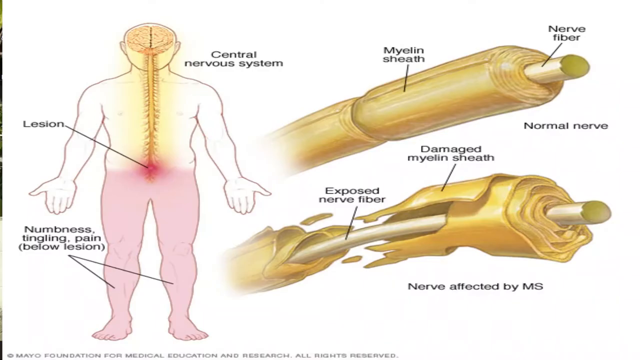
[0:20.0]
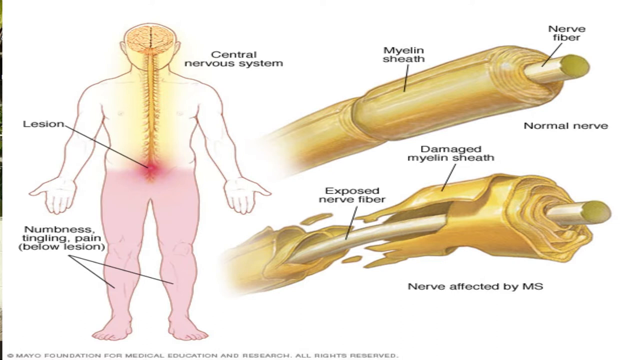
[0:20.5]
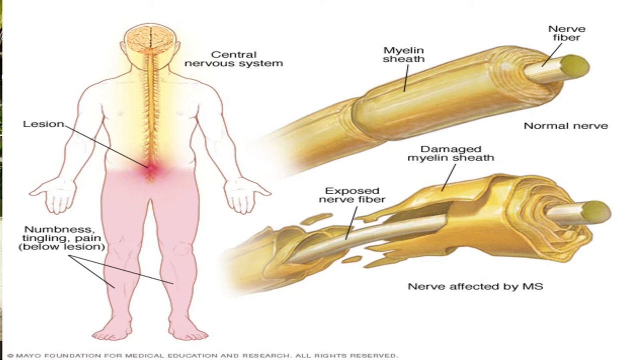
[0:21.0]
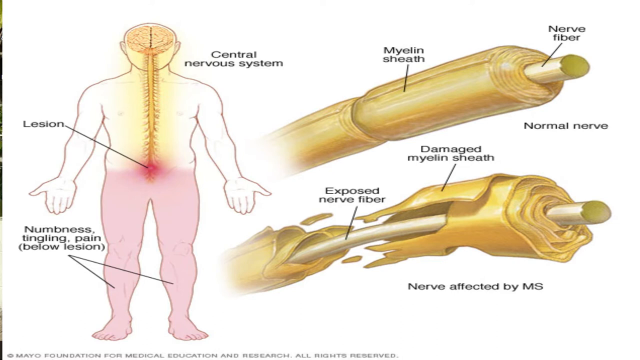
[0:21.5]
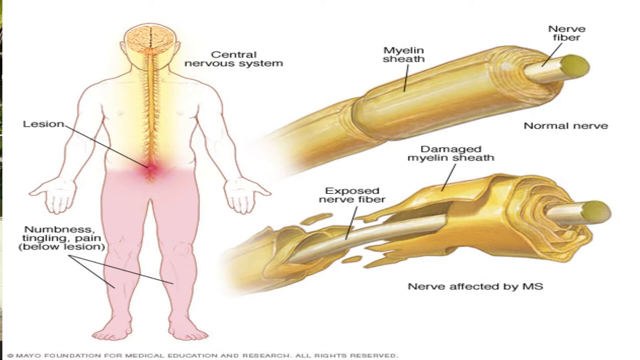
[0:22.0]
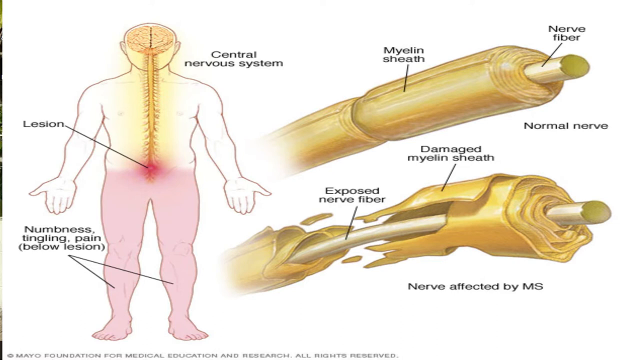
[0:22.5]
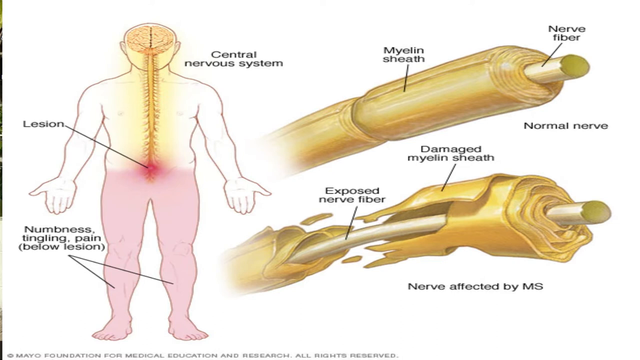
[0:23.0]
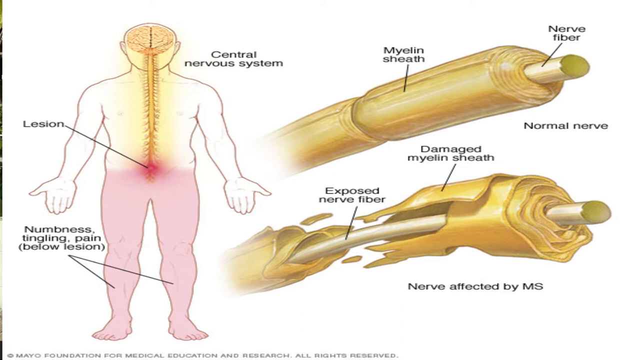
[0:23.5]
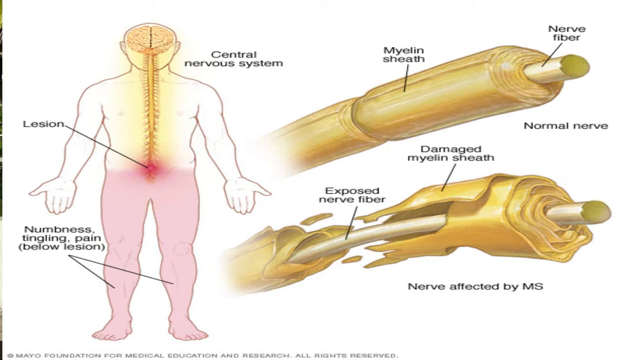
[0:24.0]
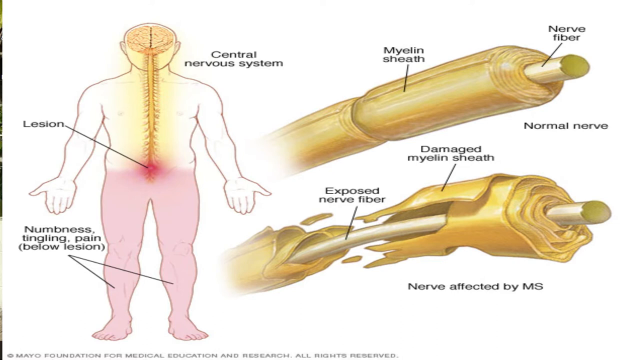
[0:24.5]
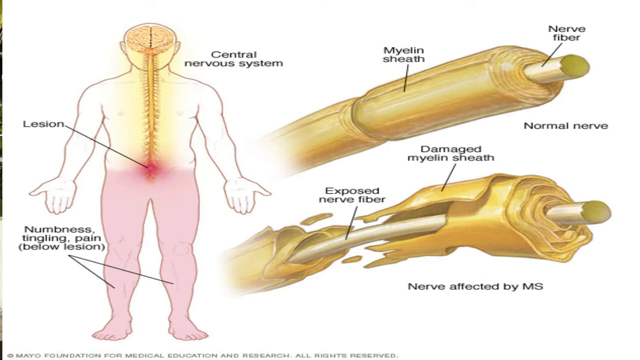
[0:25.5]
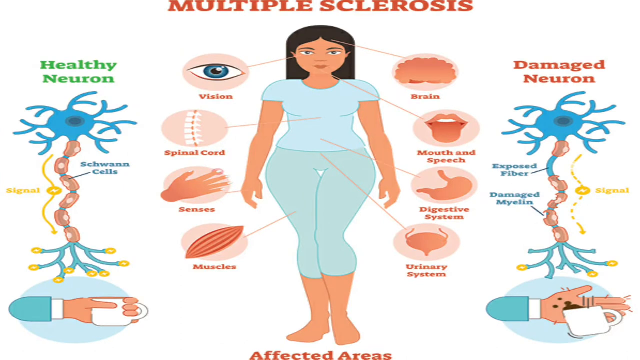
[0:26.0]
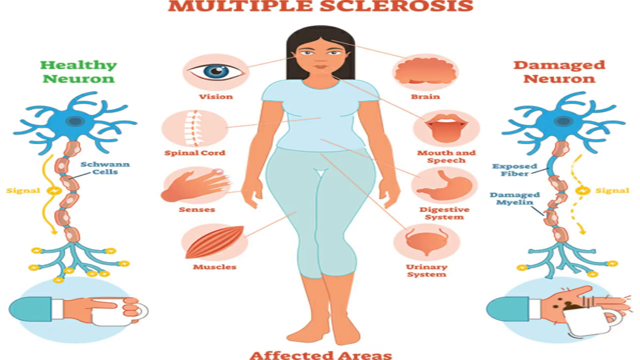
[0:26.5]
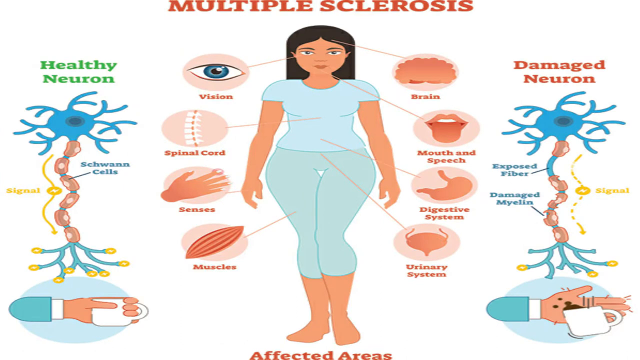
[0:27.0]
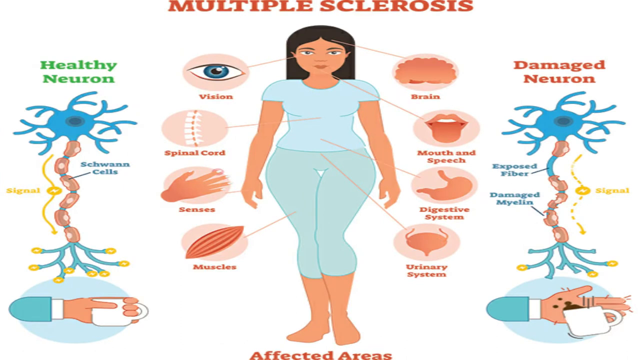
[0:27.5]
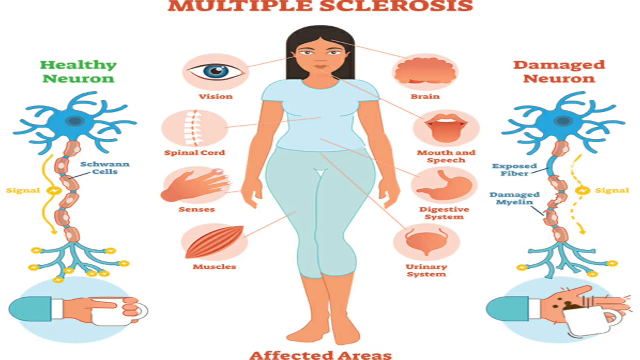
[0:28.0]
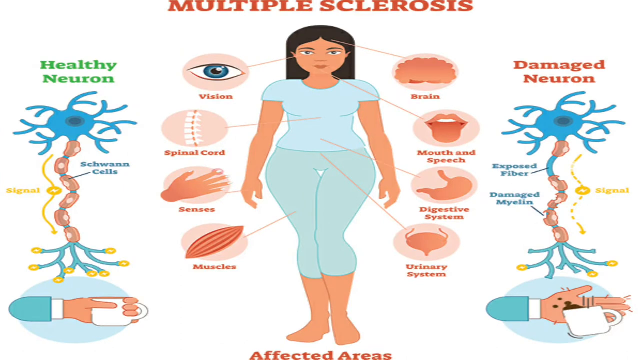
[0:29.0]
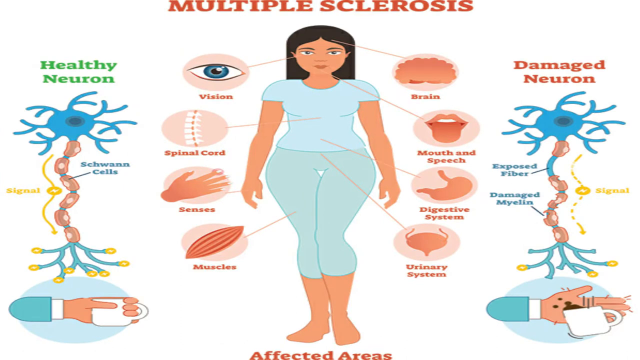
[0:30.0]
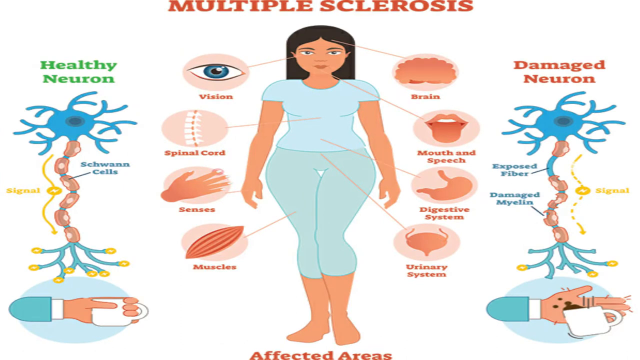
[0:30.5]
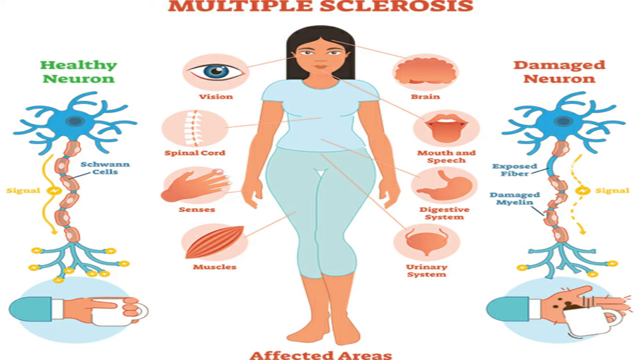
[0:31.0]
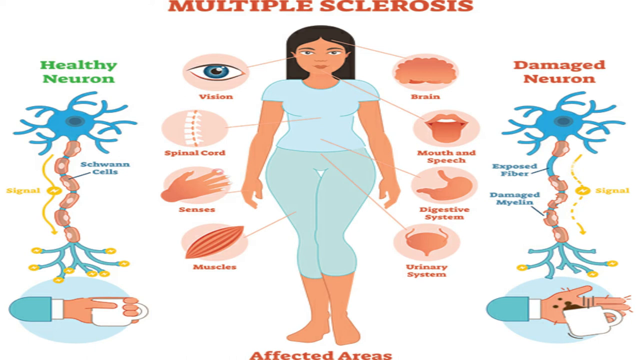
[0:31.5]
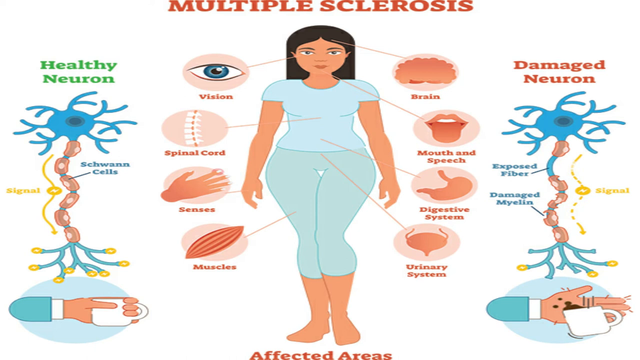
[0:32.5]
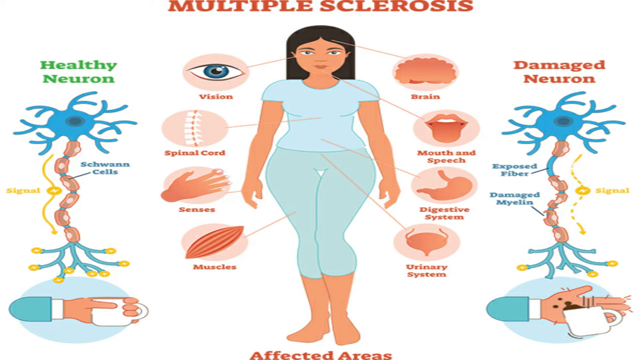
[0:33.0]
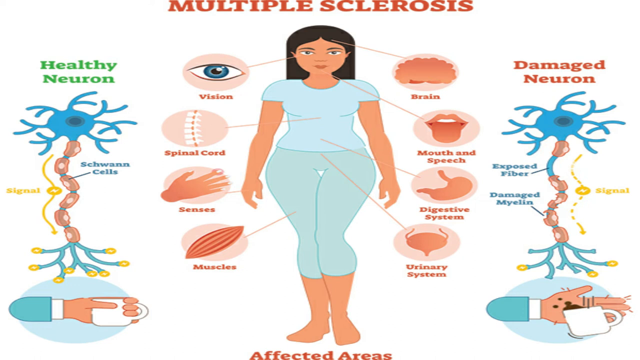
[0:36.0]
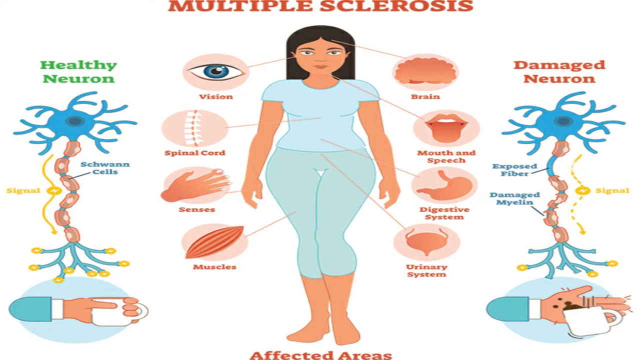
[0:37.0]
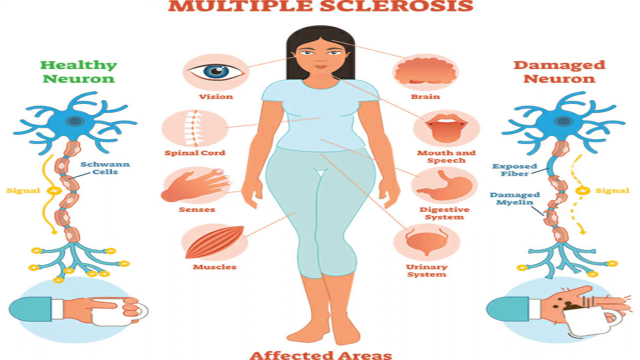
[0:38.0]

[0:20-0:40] Several diagrams are shown. On the left side is the central nervous system: what looks like a diagram of a man showing his brain, a spinal cord going down, and a swollen red spot underneath the spinal cord labeled "lesion." The lower half of his body is a sort of light red color, and both legs are labeled "numbness, tingling, pain (below lesion)." On the right side is a close-up of a normal nerve and a nerve affected by MS. The normal nerve is full, whole, round, and looks healthy, while the nerve affected by MS underneath has exposed nerve fiber and damaged myelin sheath, so it looks like it is falling apart and not rolled up tight. Another diagram follows, showing a cartoon image of a woman wearing a shirt and capri pants. At the top of the screen it says "Multiple Sclerosis," and at the bottom it says "affected areas." Different parts of her body are labeled, with a line coming from her body ending in a circle that holds a larger image of the body part. The labels are brain, mouth and speech, digestive system, urinary system, muscles, senses, spinal cord, and vision. On the left and right sides of the screen are images of a healthy neuron and a damaged neuron. Underneath the healthy neuron is an image of a hand holding a cup of coffee; underneath the damaged neuron is a little clipart image of a hand that looks like it has just dropped the coffee, with the coffee spilling everywhere.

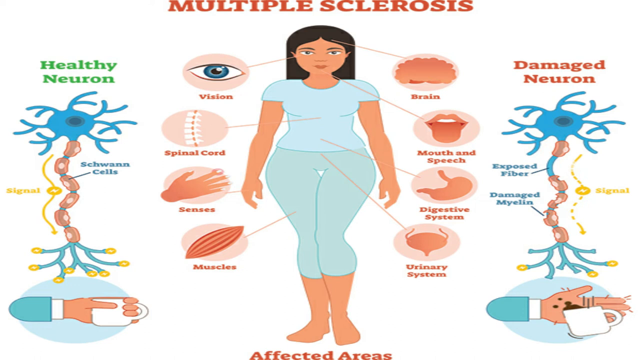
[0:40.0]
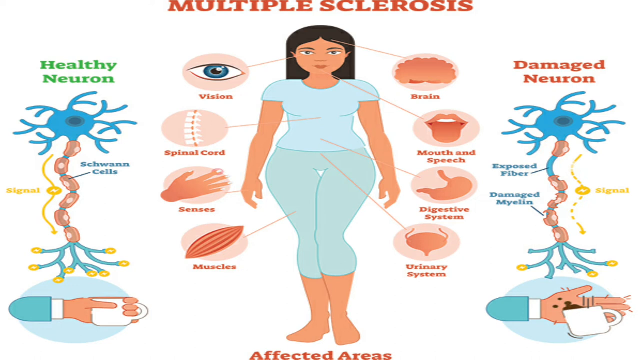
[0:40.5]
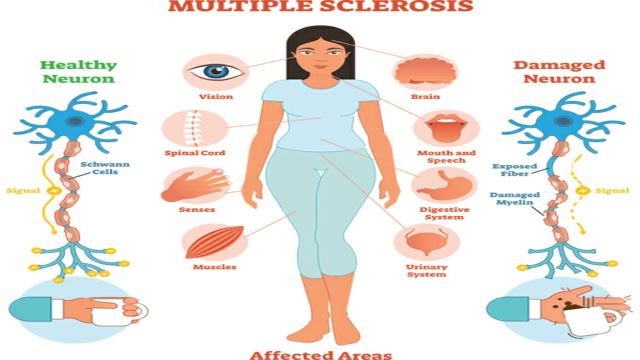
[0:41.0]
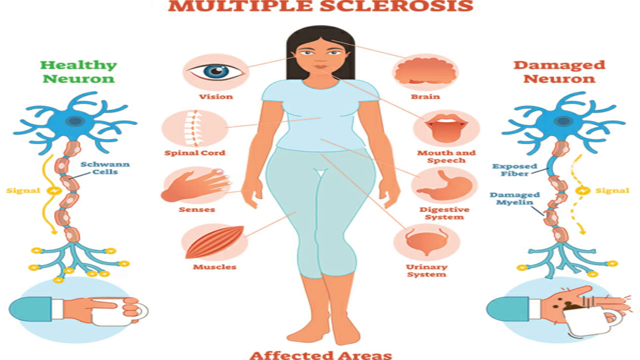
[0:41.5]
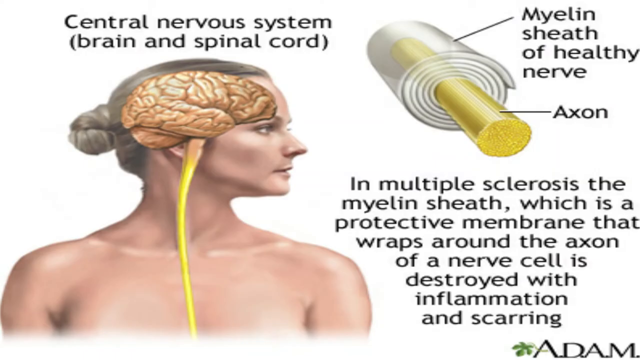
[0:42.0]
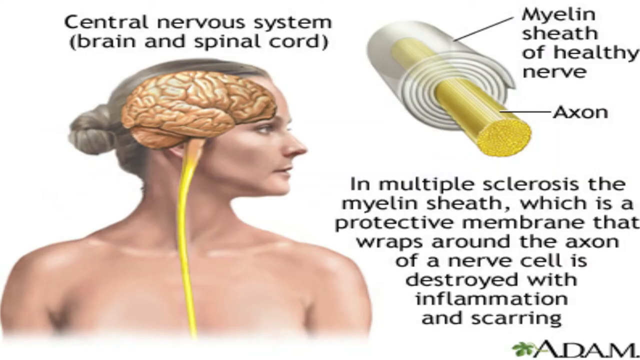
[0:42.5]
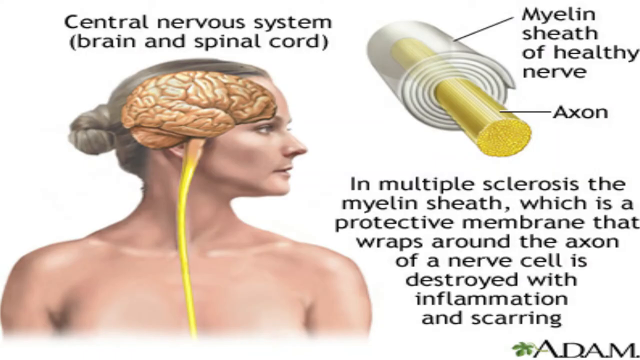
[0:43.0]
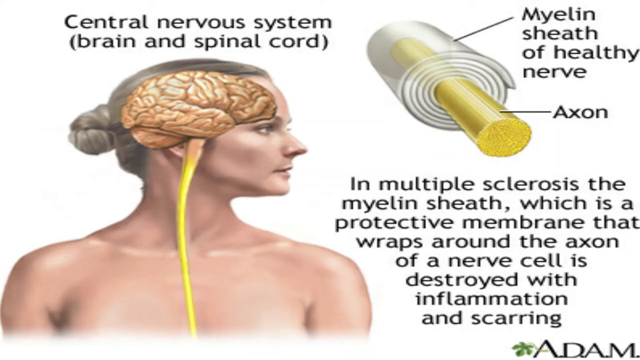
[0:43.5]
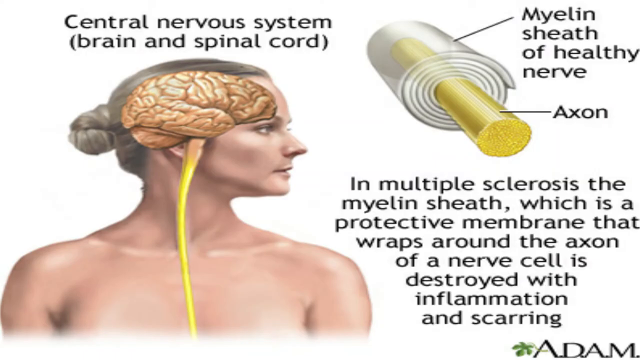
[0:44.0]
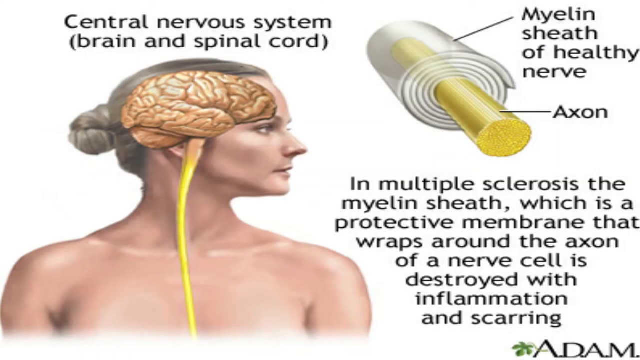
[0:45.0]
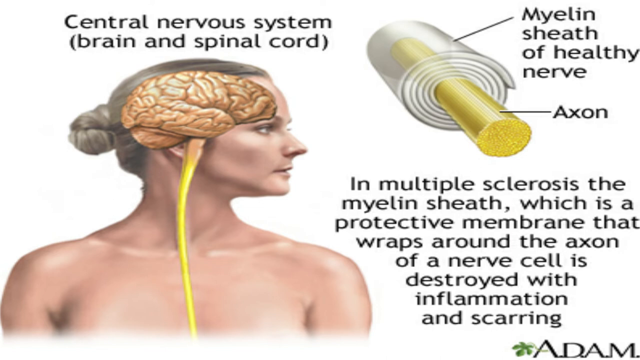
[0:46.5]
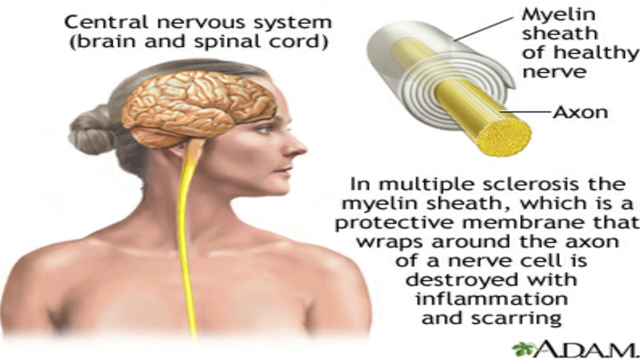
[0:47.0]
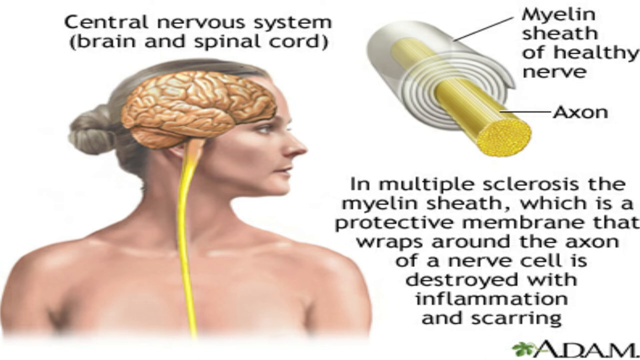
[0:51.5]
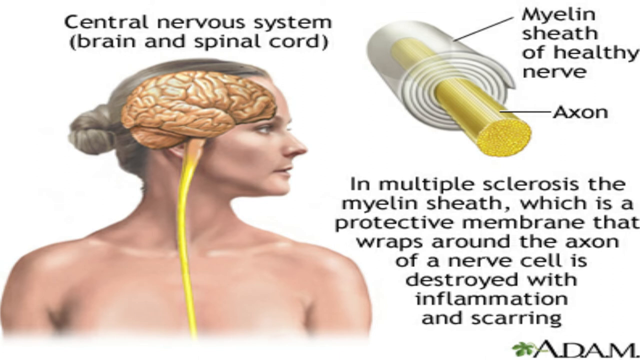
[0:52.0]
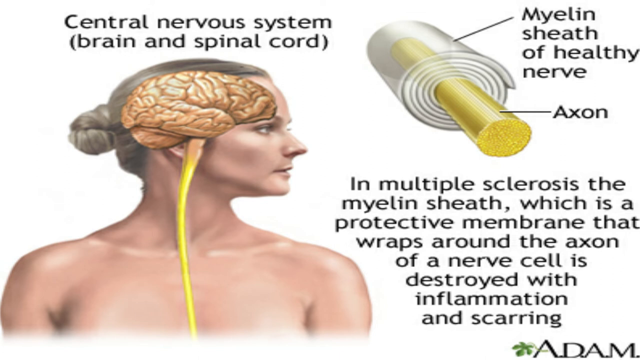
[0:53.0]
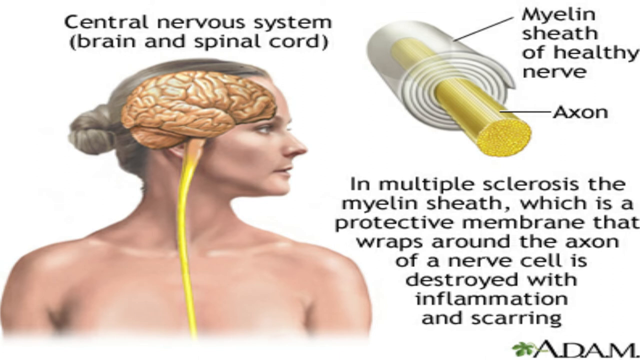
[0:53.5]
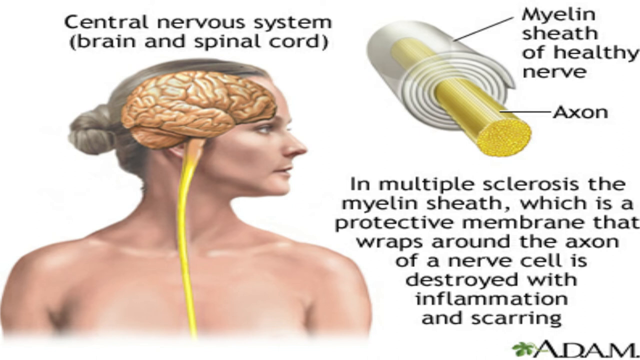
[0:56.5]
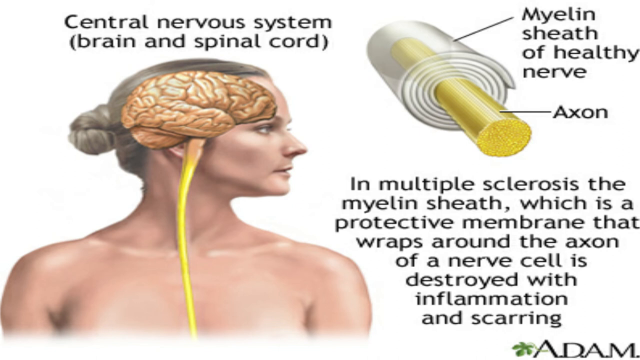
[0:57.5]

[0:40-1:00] A diagram on a white background has "multiple sclerosis" at the top of the screen and "affected areas" at the bottom. In the middle is a cartoon-looking image of a woman with different parts of her body labeled, possibly the affected areas: vision, brain, spinal cord, mouth and speech, senses, digestive system, muscles, and urinary system. To the left and right of the screen are images of healthy neurons and damaged neurons. The screen changes to a close-up of a woman turned somewhat to the side, seen from the chest up. A light brown brain is over her head where the brain would be, with a long yellow stem going down. Above her it says "central nervous system," and in parentheses beneath that, "brain and spinal cord." At the top right of the screen is what looks like a nerve: a long, skinny yellow cylindrical rod with a light gray wrapping around it. The wrapping is labeled "myelin sheath of healthy nerve" and the rod is labeled "axon." On the bottom right side of the screen, black text says "in multiple sclerosis the myelin sheath which is a protective membrane that wraps around the axon of a nerve cell is destroyed with inflammation and scarring."